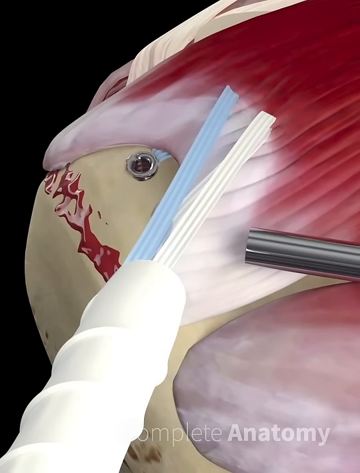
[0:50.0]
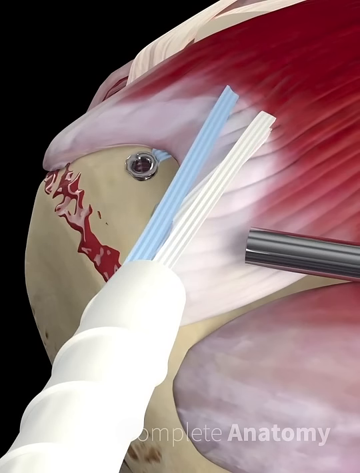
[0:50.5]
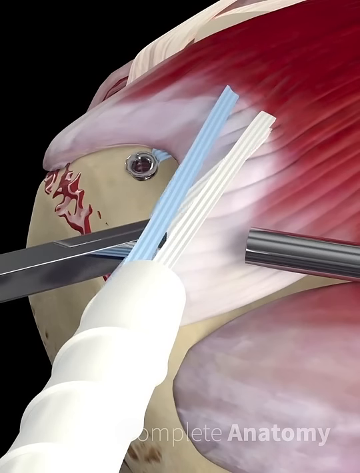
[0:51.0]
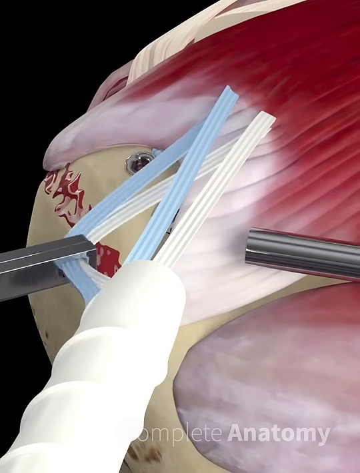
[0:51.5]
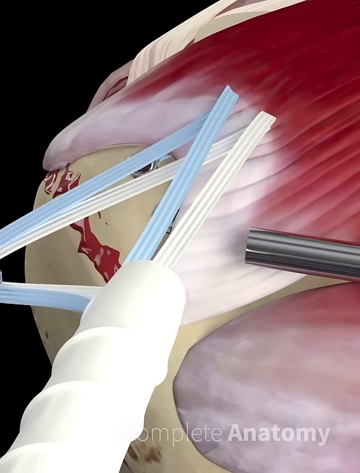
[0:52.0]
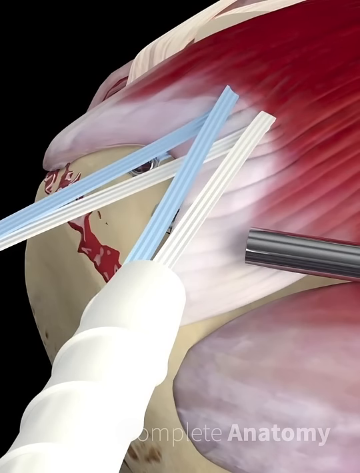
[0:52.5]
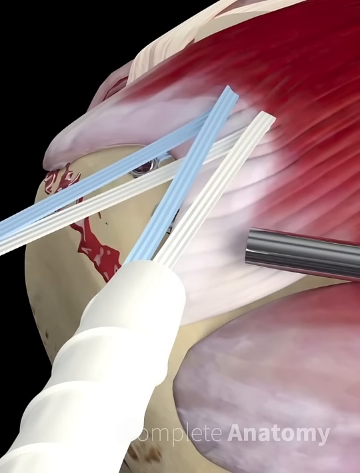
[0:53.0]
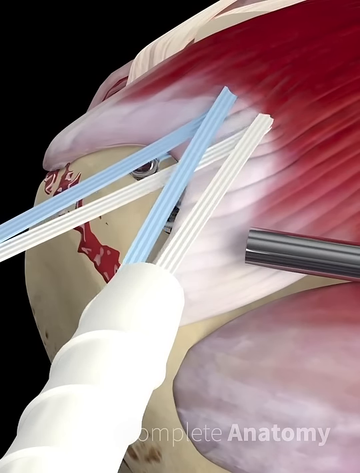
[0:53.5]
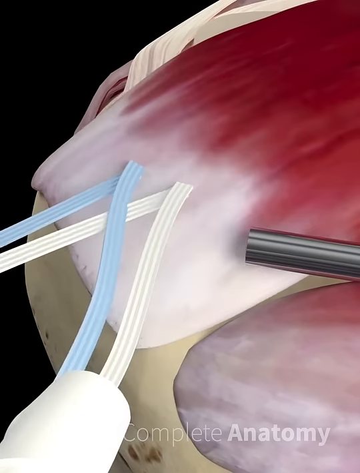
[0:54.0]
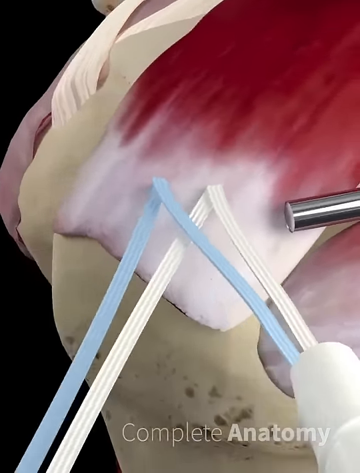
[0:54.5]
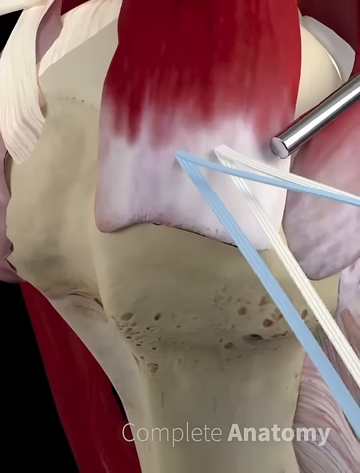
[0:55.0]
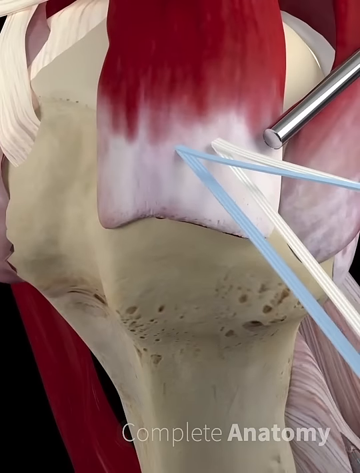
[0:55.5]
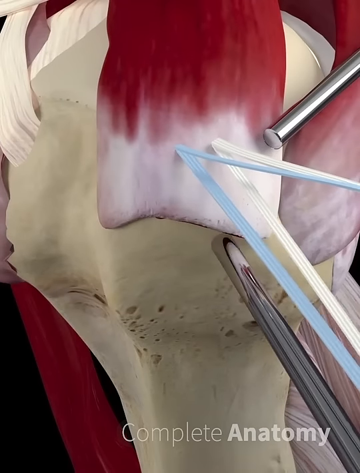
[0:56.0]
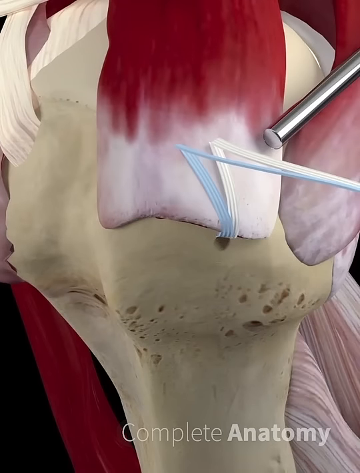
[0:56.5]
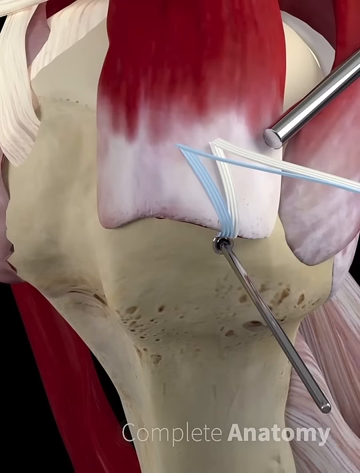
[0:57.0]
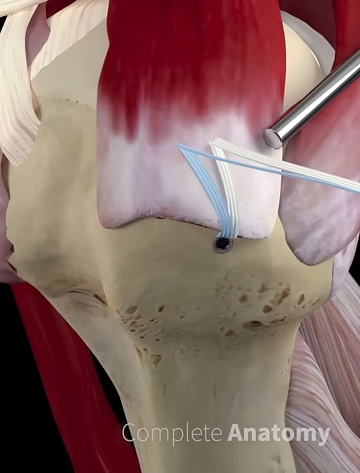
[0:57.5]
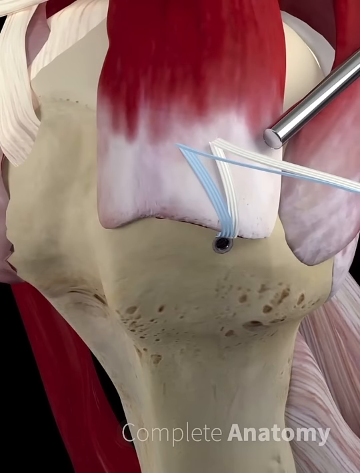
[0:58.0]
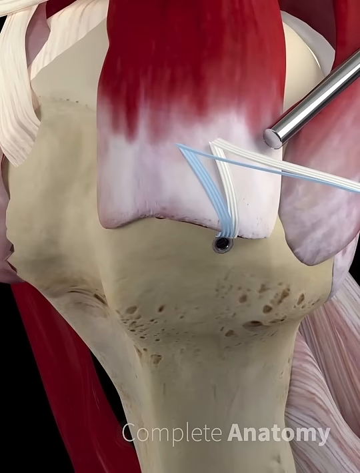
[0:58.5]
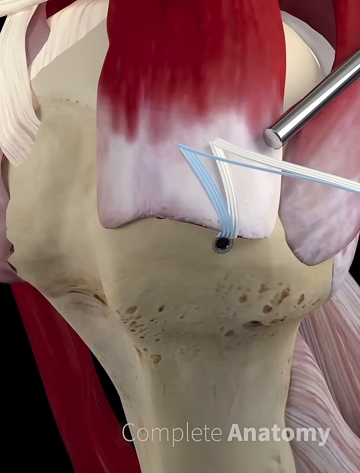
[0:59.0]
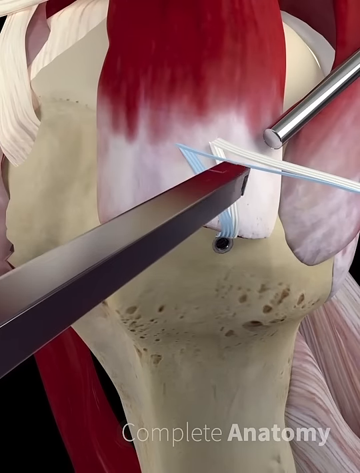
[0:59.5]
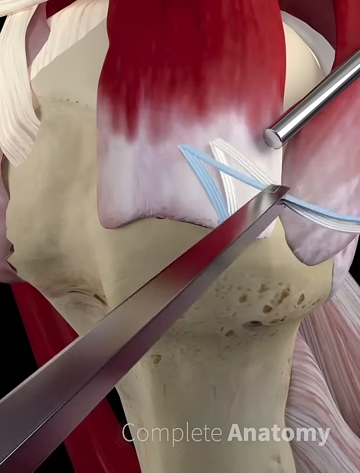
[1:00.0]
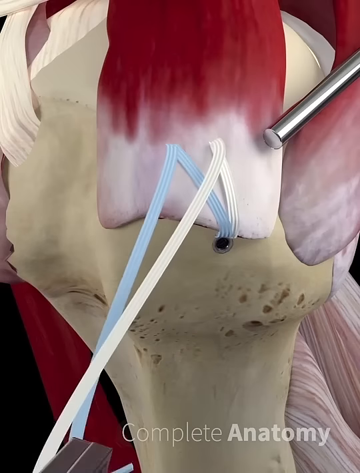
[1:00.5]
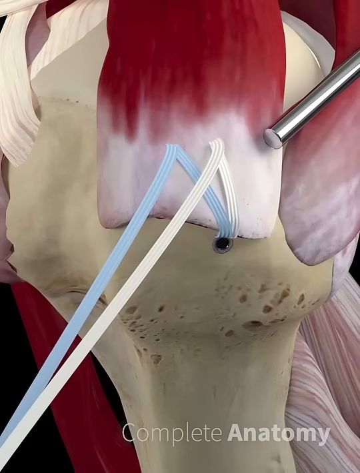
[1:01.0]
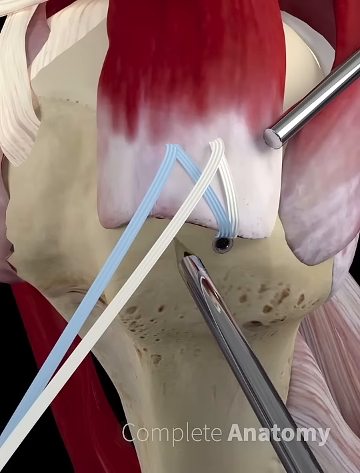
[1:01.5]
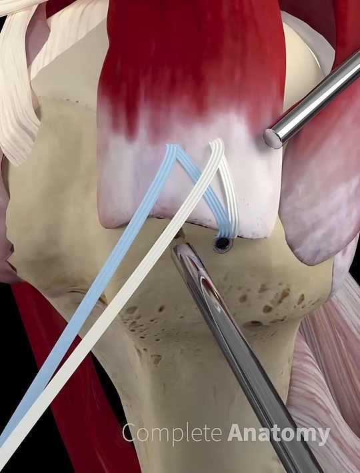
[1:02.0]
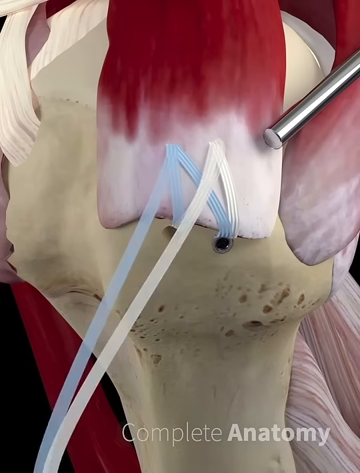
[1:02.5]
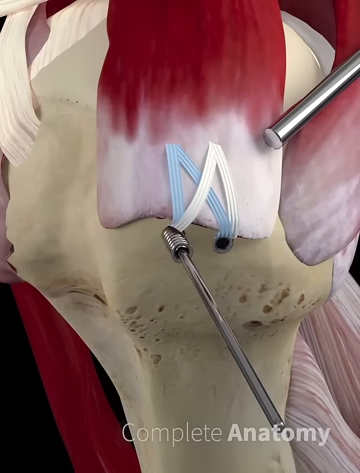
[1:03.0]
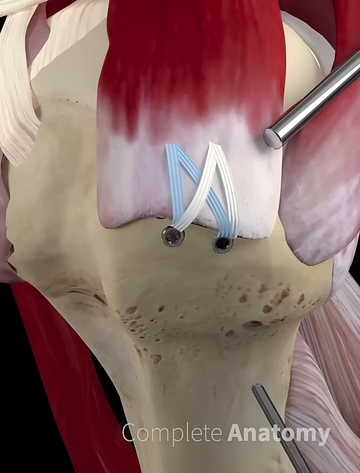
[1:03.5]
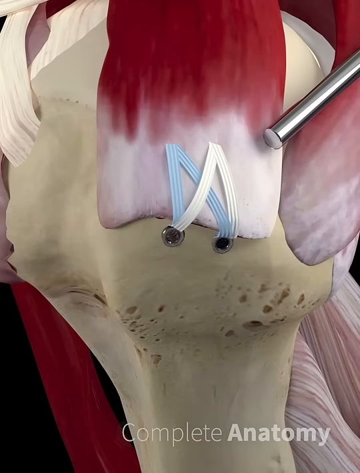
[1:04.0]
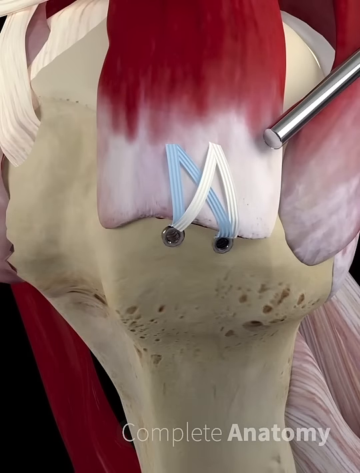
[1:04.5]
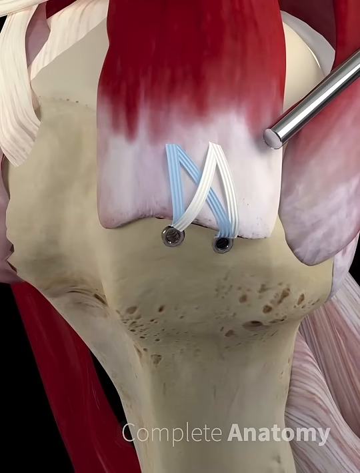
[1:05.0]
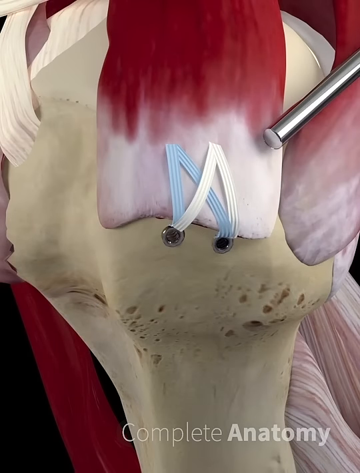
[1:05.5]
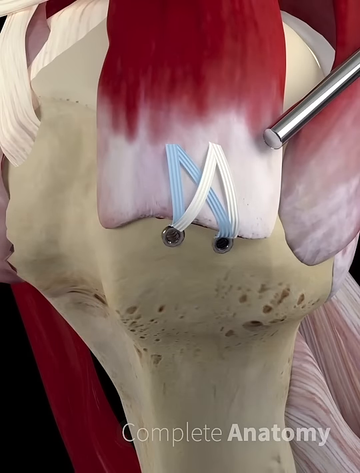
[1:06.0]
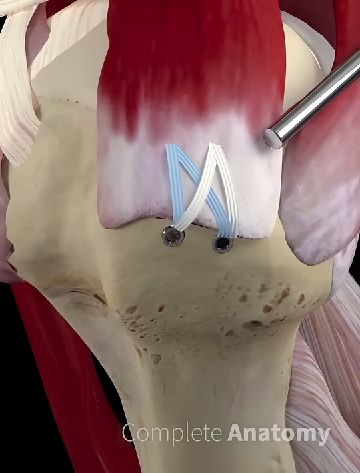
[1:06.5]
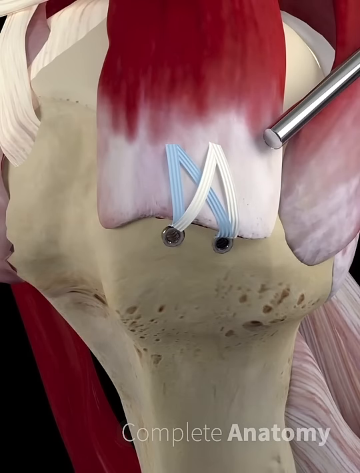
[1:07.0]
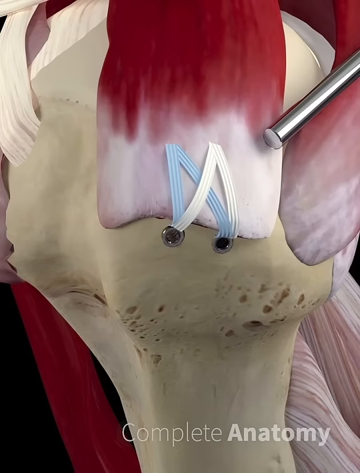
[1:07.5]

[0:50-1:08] The tool encased in white plastic tubing is shown, and there appear to be four pieces of the grooved tape or bandages: two white and two light blue. A metal tool pulls the tape tight from two different incisions in the muscle, pulling the muscle tight. Another hole is inserted into the bone, with a metal grommet where the hole is, and the silver tool pulls the tape. Another hole is made in the bone where the tape is pulled through, with another silver grommet, so there are two holes with two silver grommets. The white and blue tape is kind of crisscrossing through the two incisions at the top and through the two holes with the silver grommets at the bottom. The words "Complete Anatomy" are at the bottom.